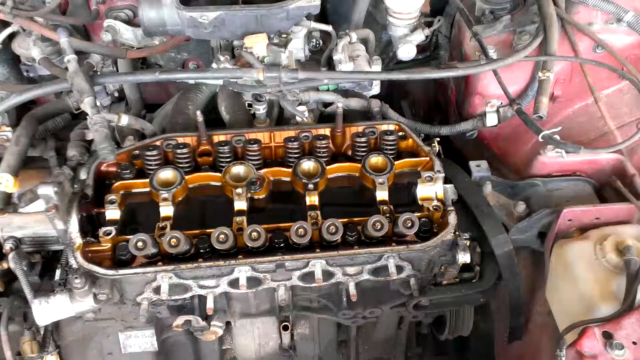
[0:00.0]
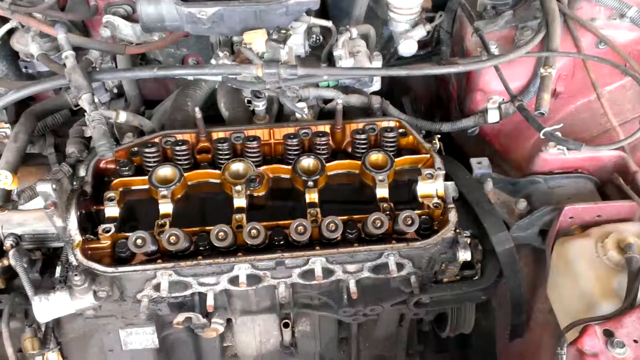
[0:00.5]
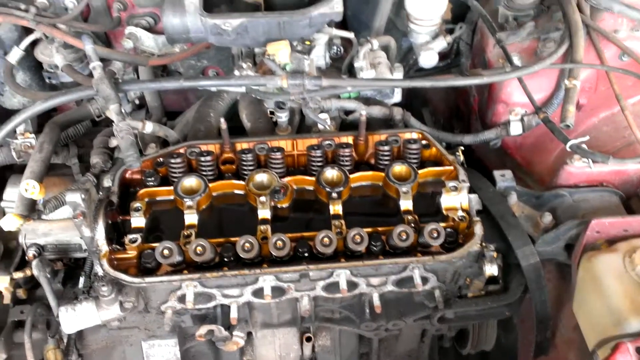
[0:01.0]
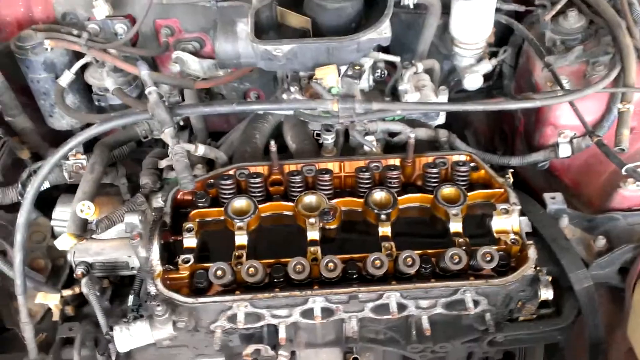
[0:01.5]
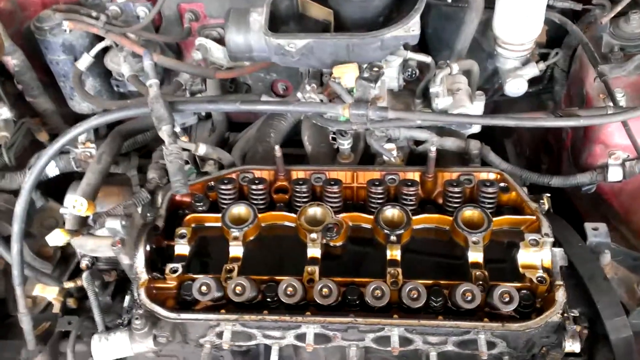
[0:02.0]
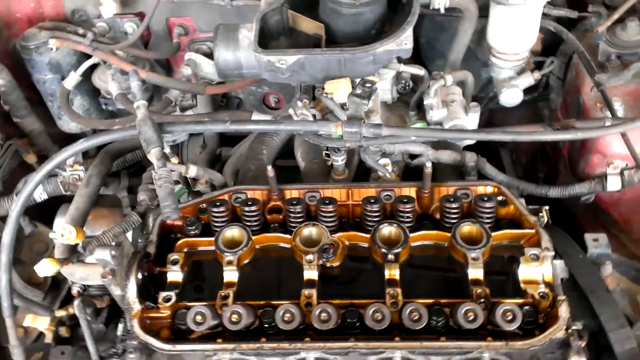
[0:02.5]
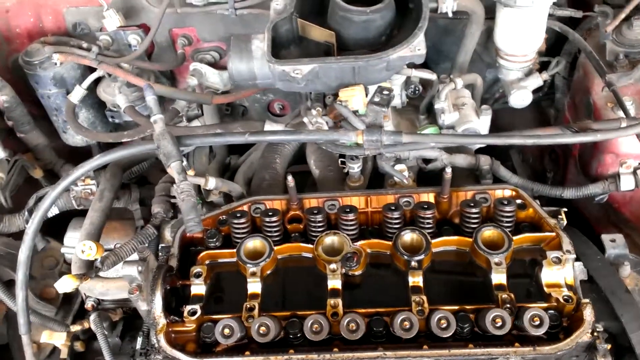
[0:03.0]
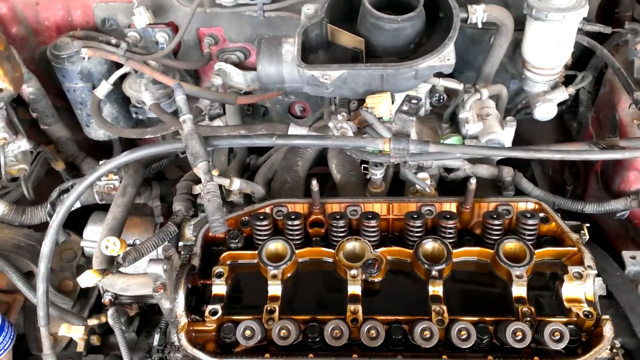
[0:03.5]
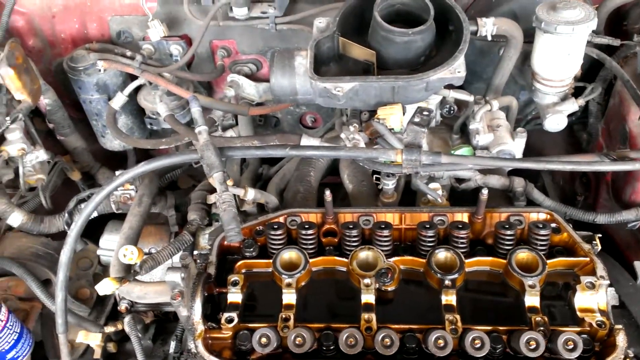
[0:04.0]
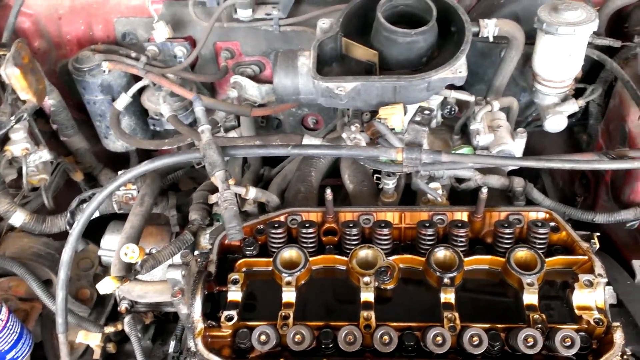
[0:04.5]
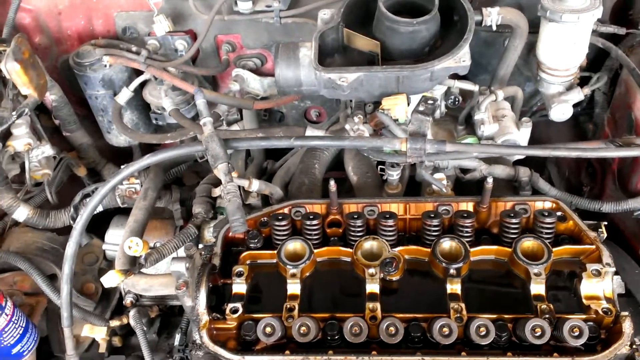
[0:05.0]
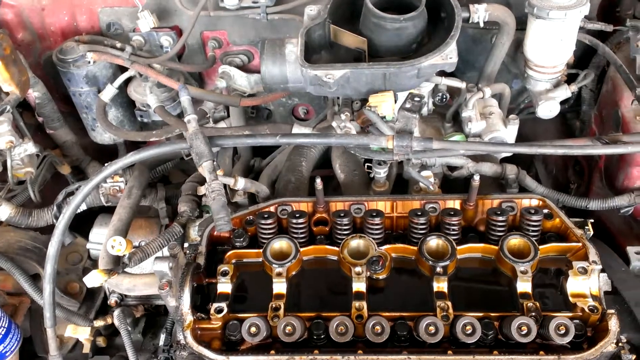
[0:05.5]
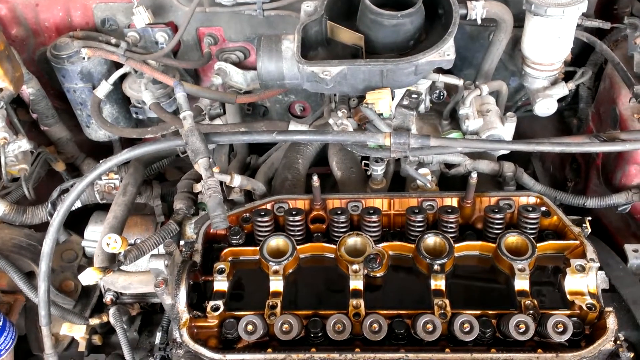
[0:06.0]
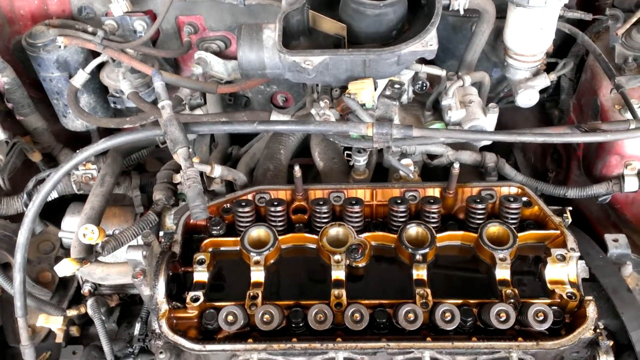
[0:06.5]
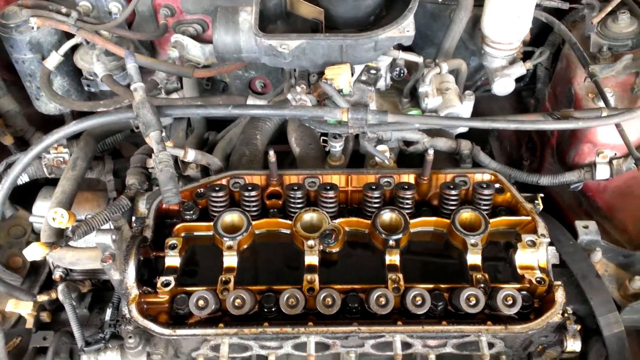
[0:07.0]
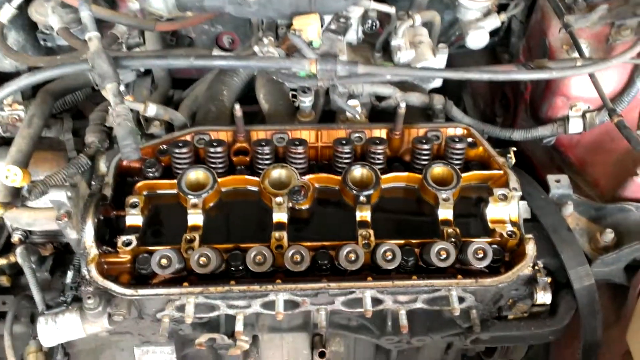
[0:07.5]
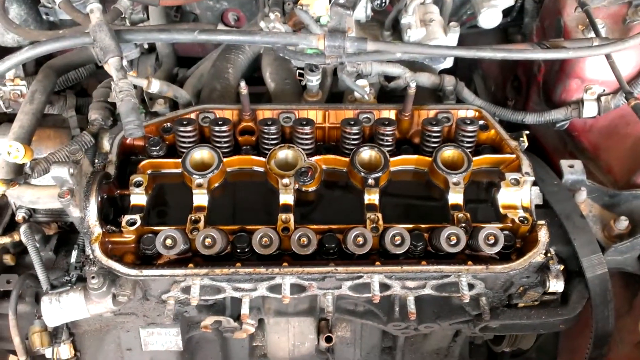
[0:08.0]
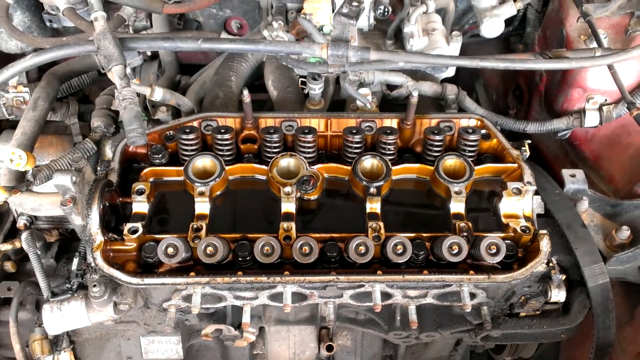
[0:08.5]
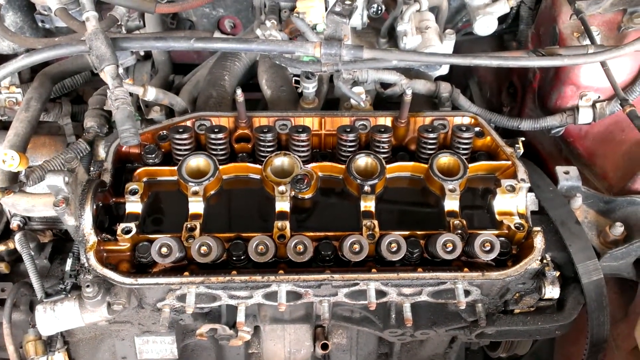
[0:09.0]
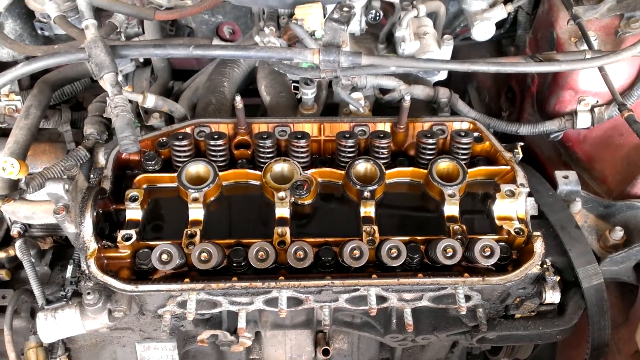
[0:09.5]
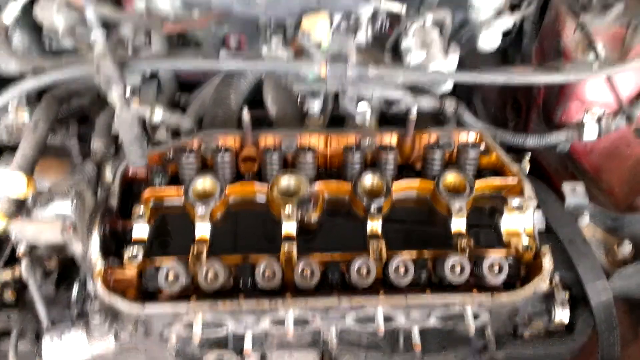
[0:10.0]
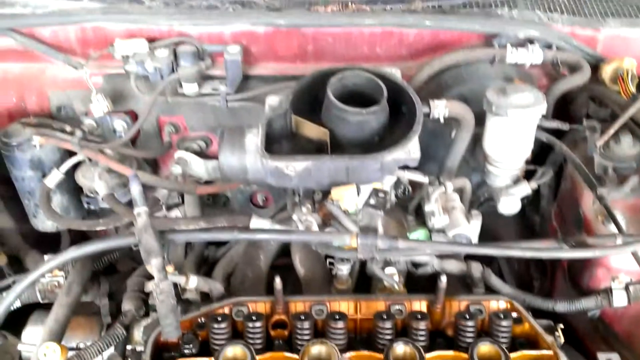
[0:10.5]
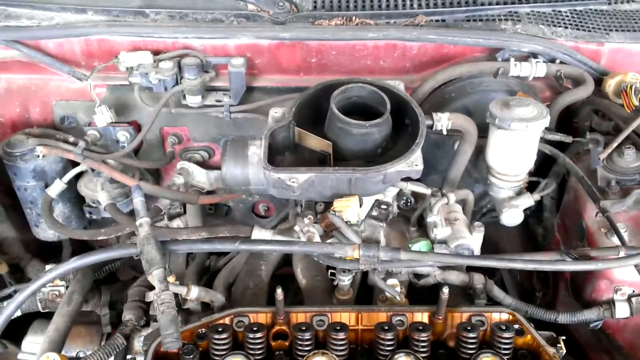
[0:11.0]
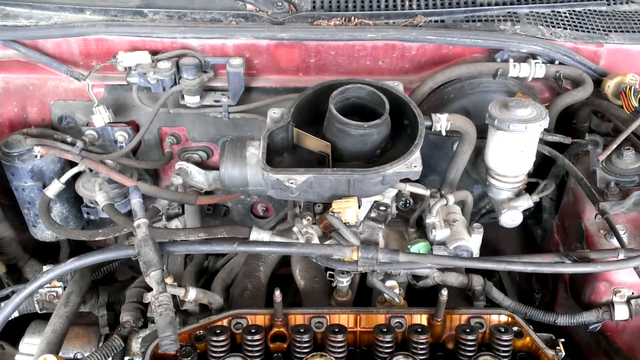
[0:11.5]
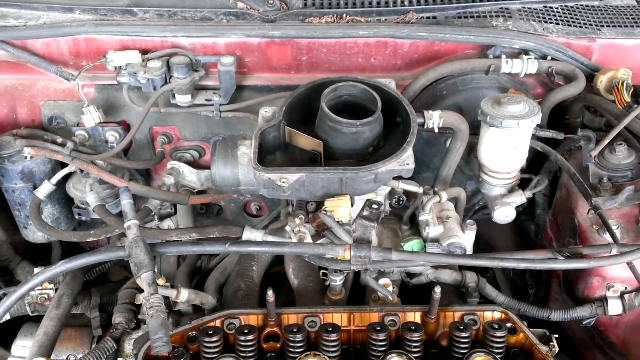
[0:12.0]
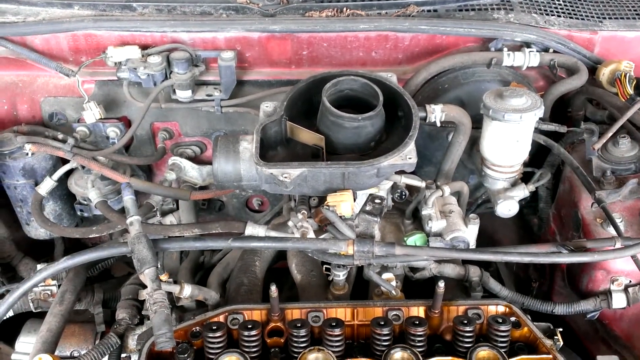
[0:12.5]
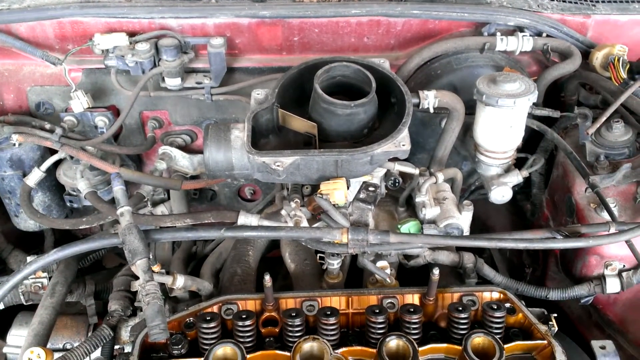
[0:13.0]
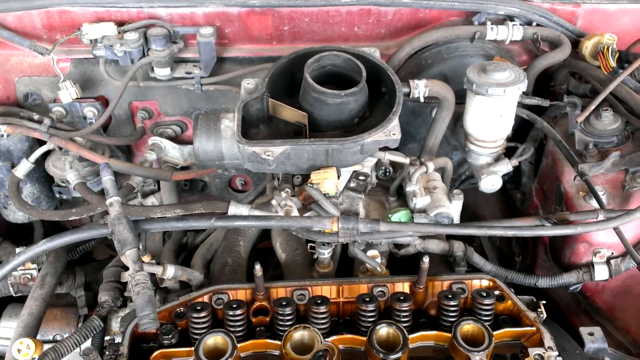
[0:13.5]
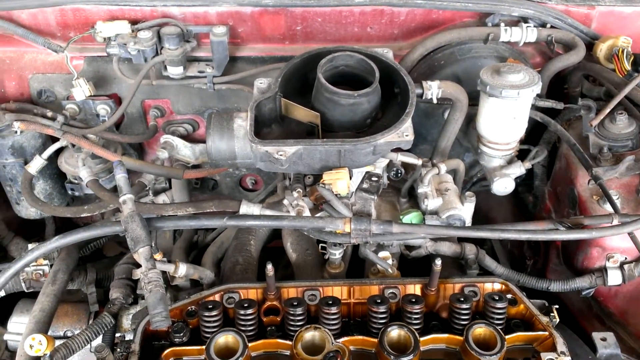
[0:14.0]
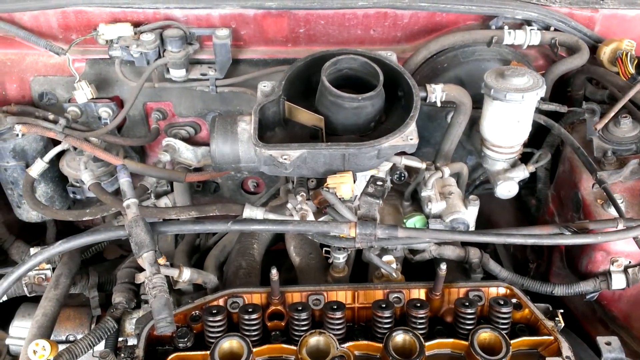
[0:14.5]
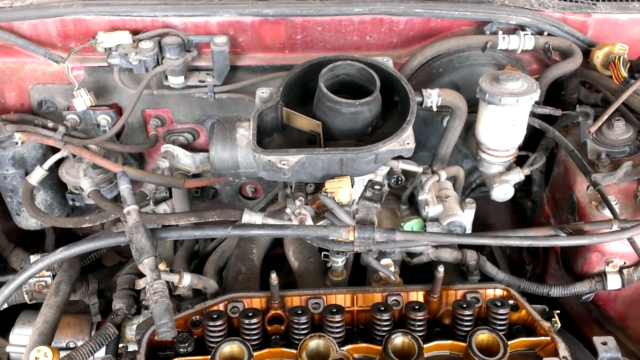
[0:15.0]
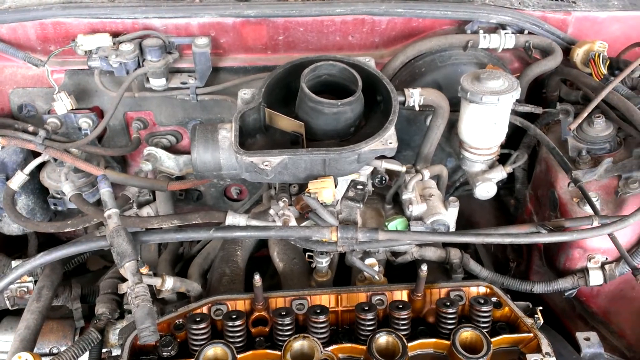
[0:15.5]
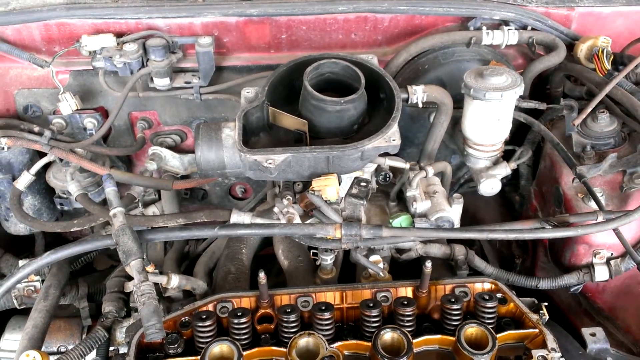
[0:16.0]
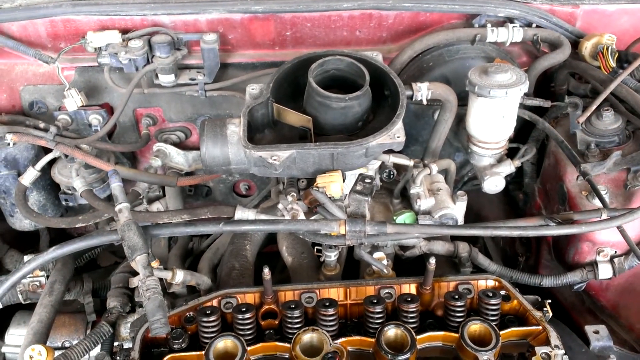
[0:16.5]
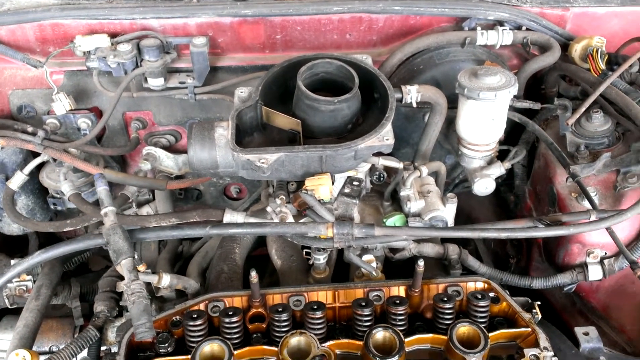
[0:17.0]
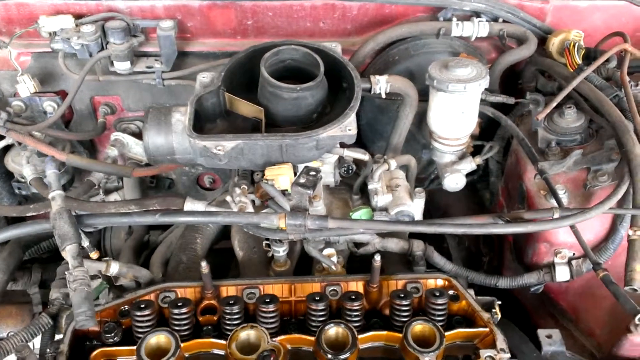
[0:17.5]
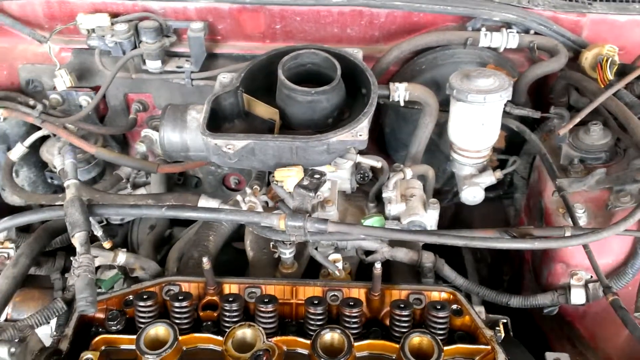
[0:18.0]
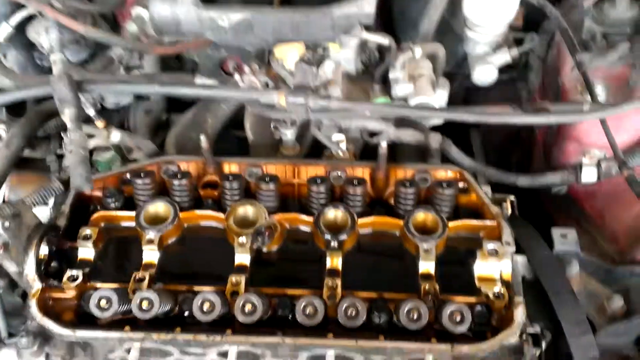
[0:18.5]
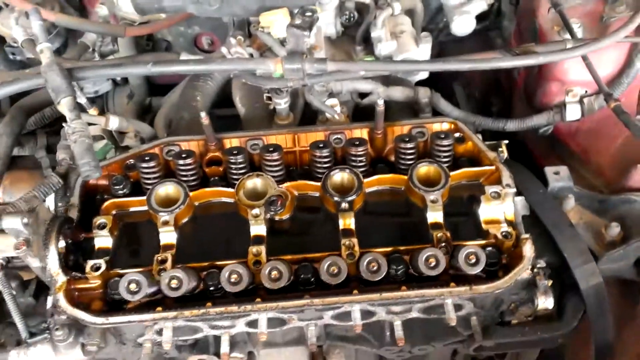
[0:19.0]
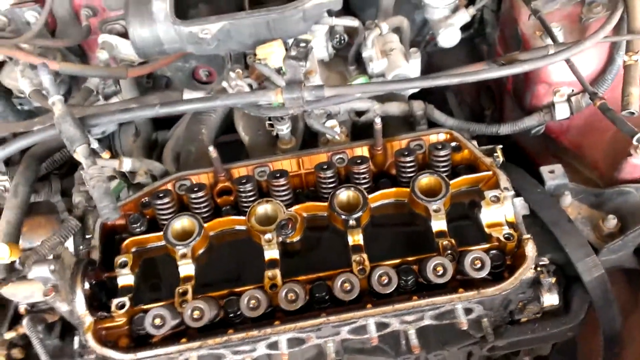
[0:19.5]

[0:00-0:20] A piece of metal machinery is in the middle of a vehicle. It has four large bolts in the middle, eight smaller bolts underneath those, and eight smaller bolts above them. The camera then pans to another piece of machinery that has a large cylinder piece and a round piece in the middle of it. Many wires and tubes run from these pieces of machinery. The machinery in the middle is sort of a bronze color, with metal gray pieces surrounding it. To the right, red metal is showing. On the bottom right there is a canister with a tube coming out of it, and many metal wires and connections run to the pieces of machinery. On the left side, part of a WD-40 can is visible.